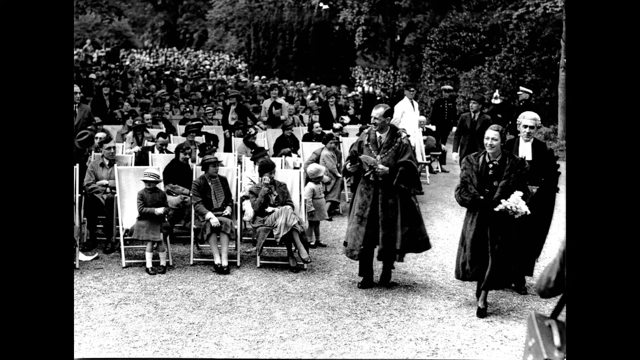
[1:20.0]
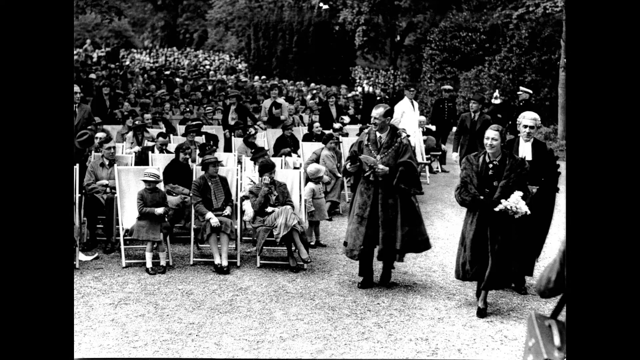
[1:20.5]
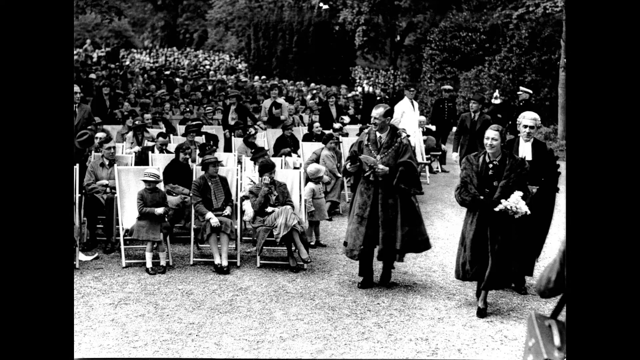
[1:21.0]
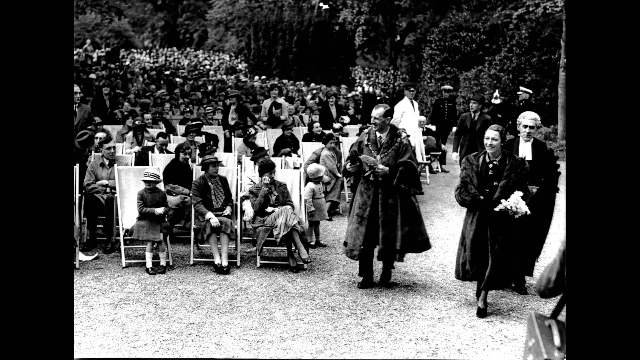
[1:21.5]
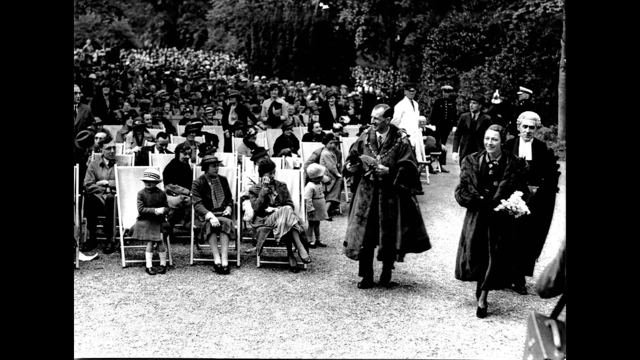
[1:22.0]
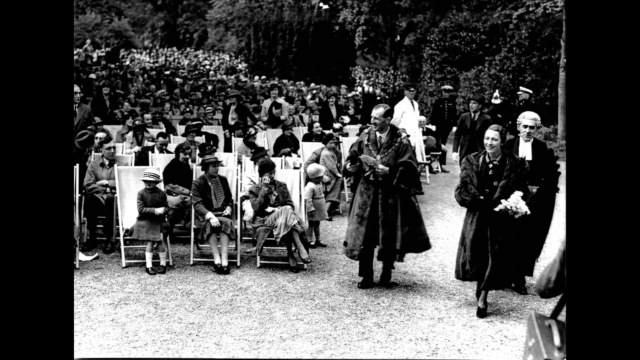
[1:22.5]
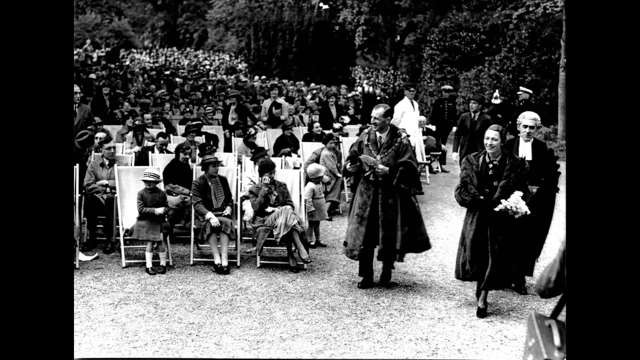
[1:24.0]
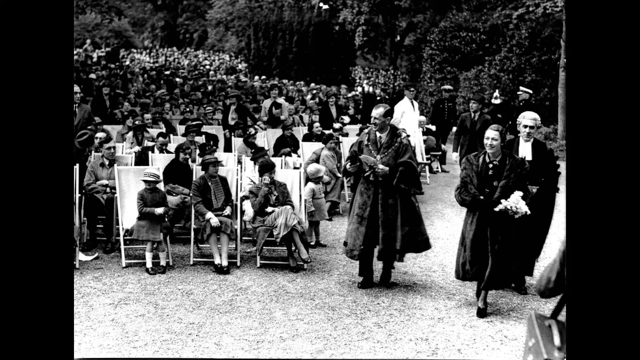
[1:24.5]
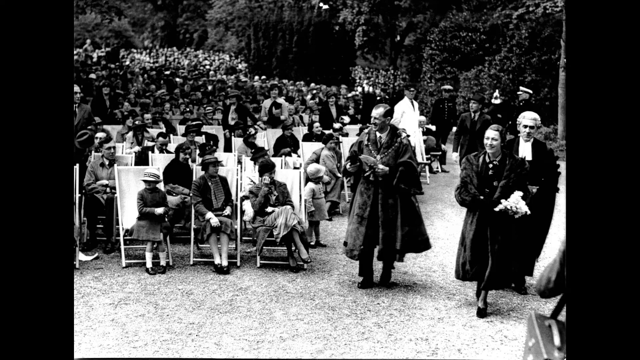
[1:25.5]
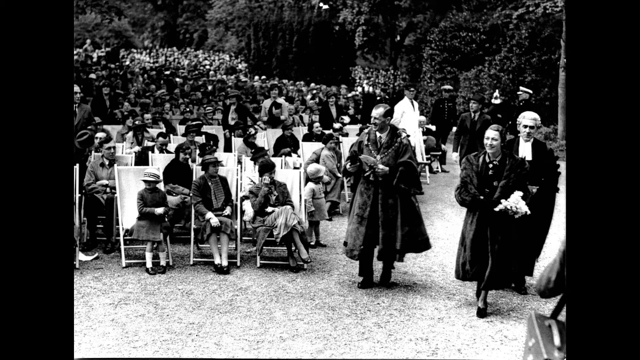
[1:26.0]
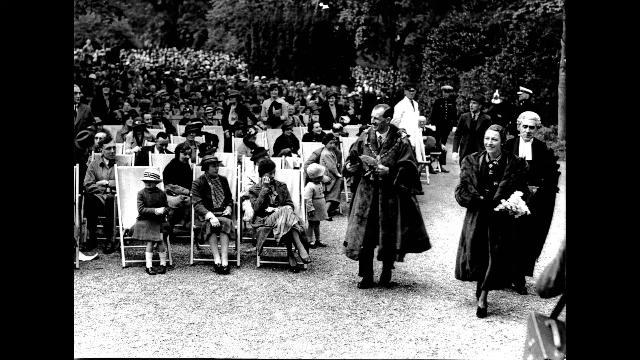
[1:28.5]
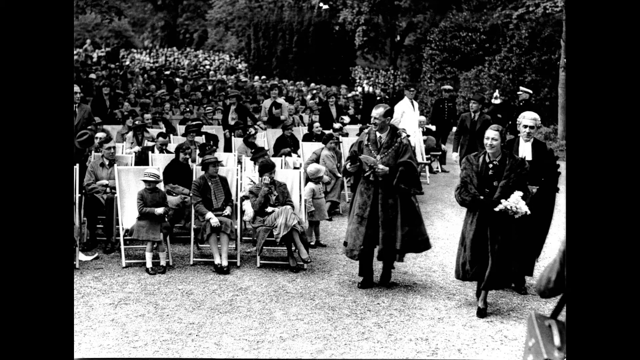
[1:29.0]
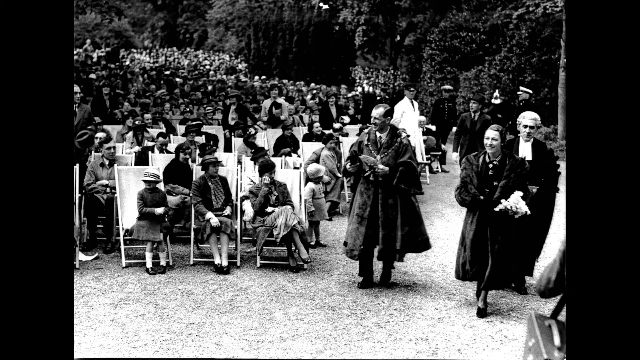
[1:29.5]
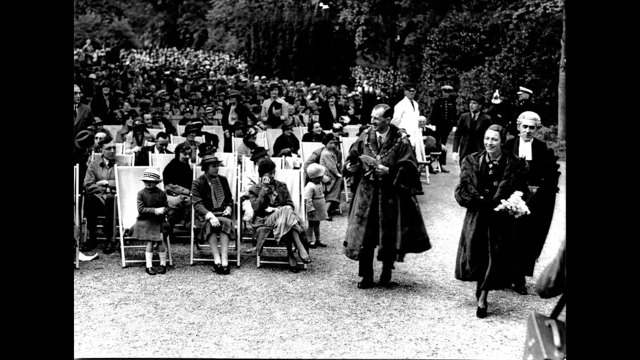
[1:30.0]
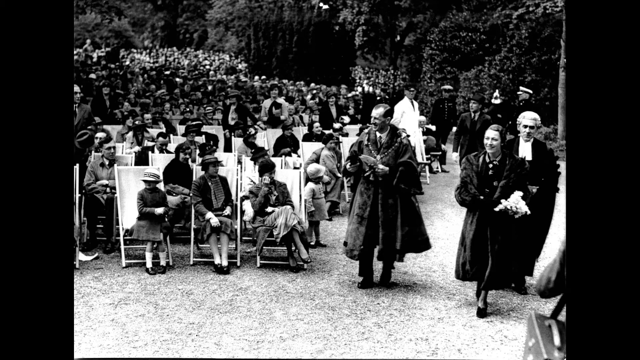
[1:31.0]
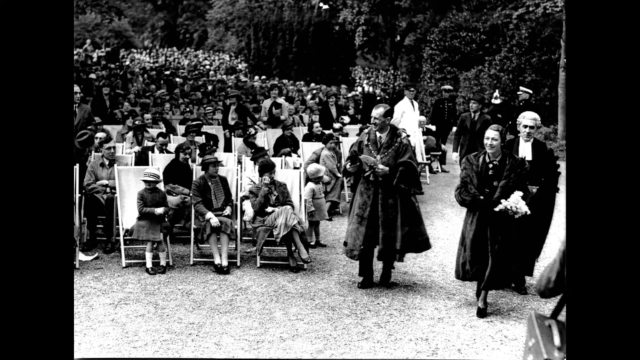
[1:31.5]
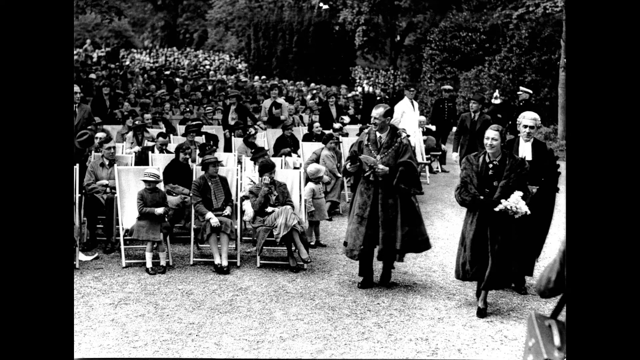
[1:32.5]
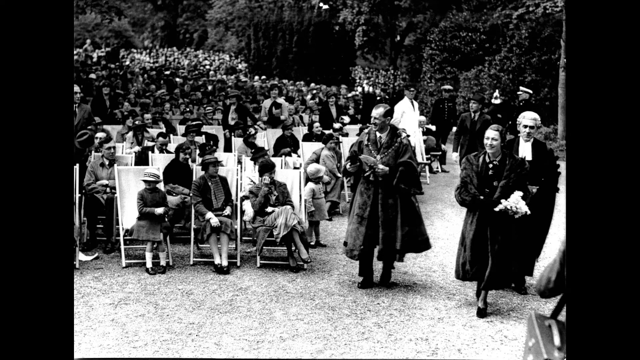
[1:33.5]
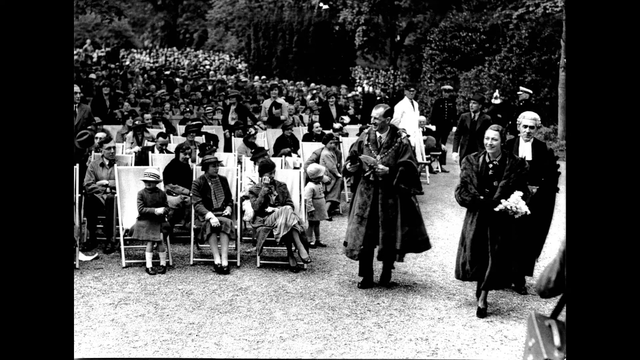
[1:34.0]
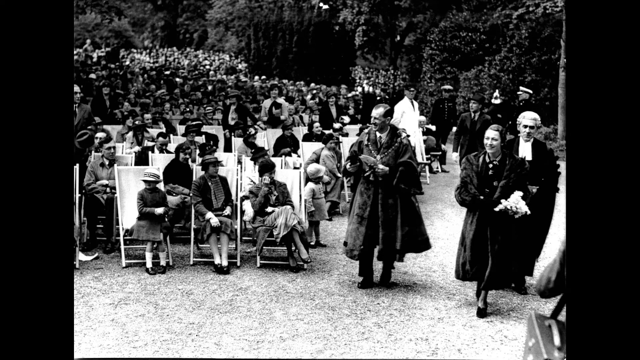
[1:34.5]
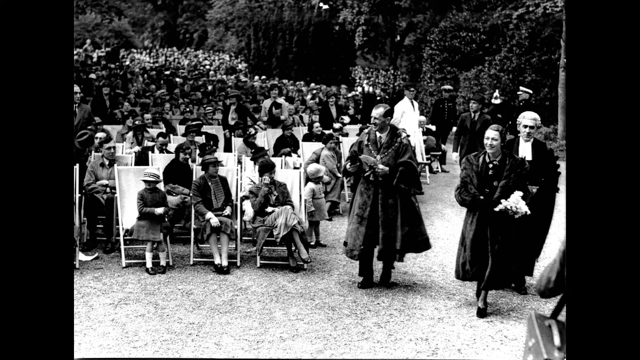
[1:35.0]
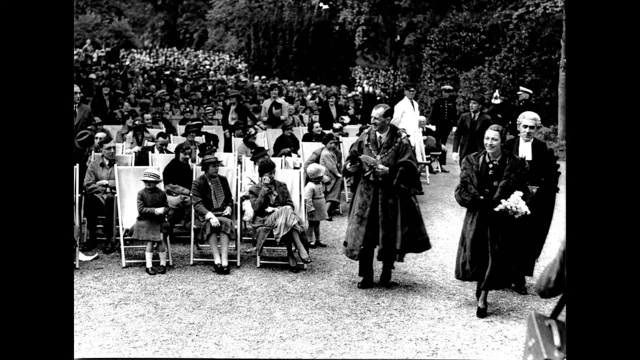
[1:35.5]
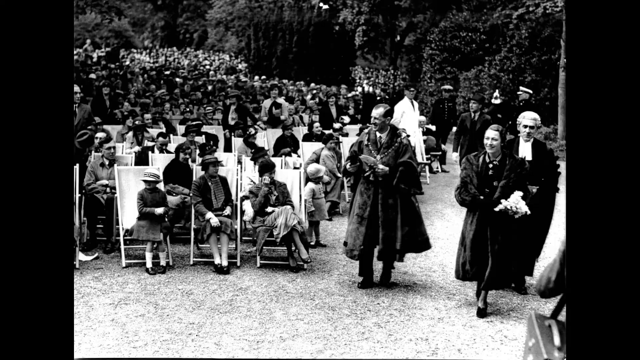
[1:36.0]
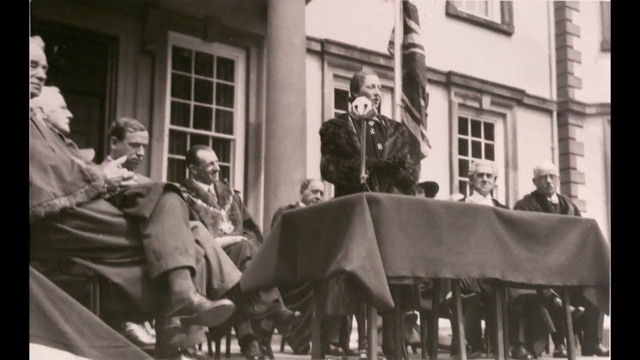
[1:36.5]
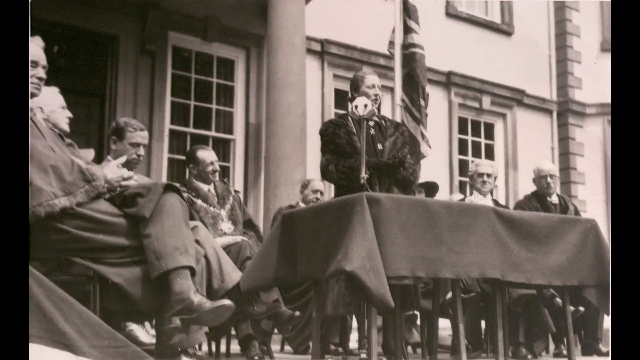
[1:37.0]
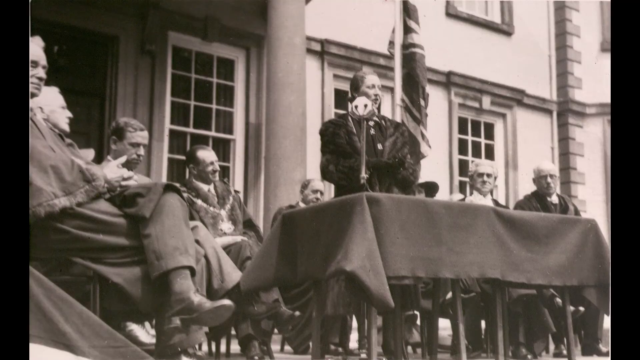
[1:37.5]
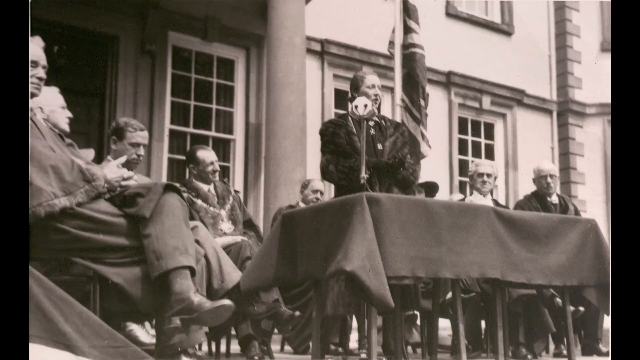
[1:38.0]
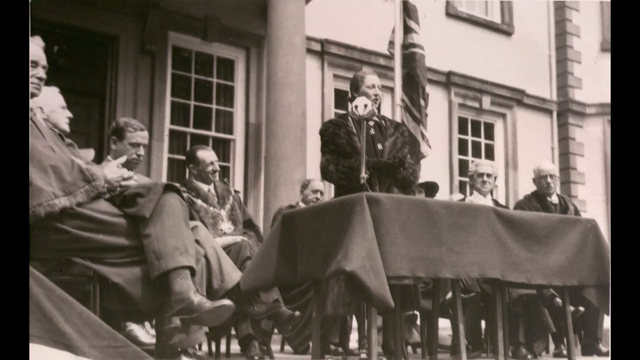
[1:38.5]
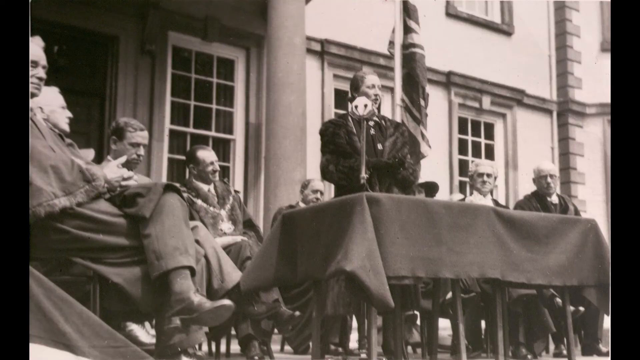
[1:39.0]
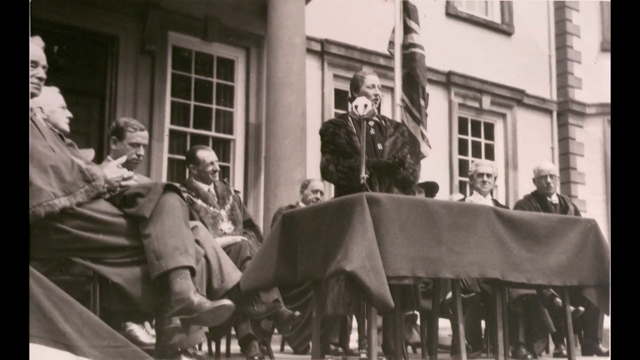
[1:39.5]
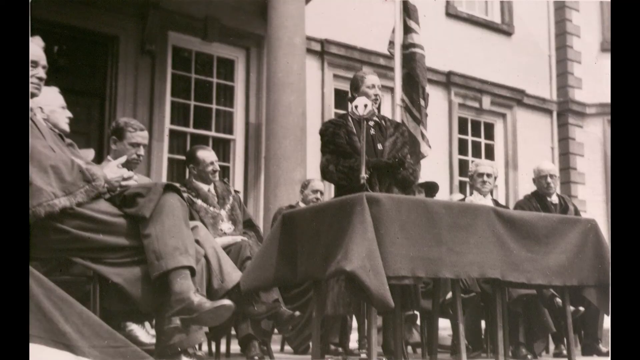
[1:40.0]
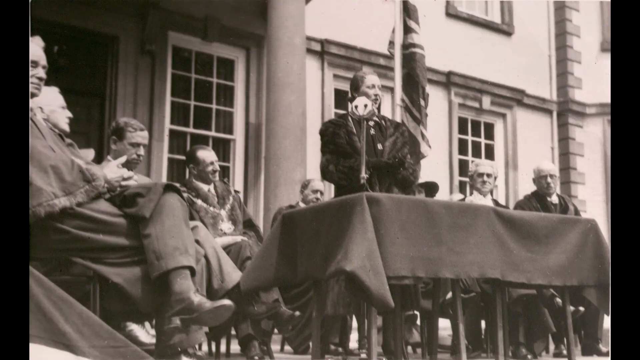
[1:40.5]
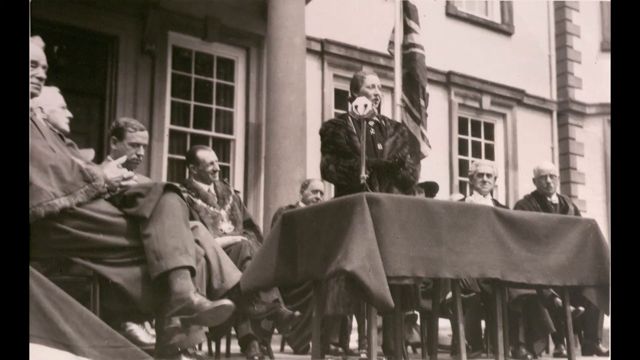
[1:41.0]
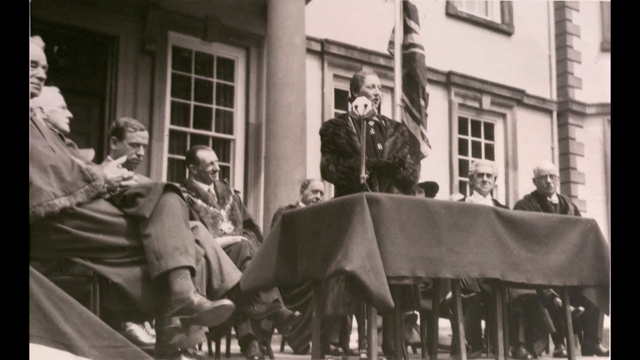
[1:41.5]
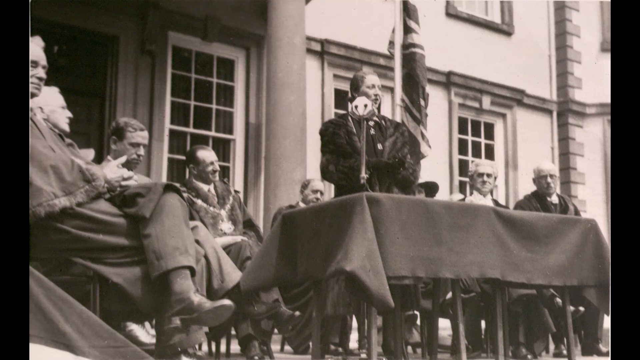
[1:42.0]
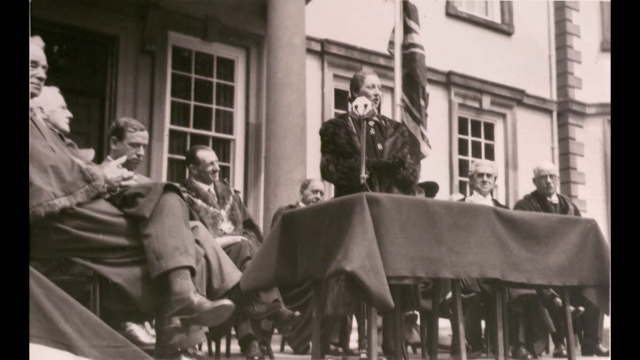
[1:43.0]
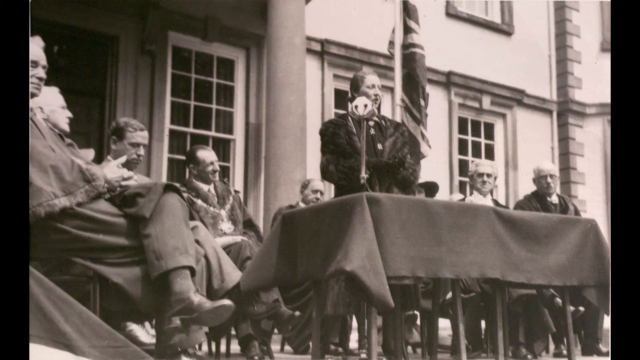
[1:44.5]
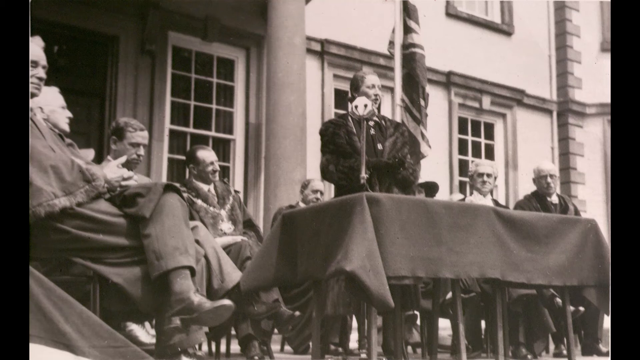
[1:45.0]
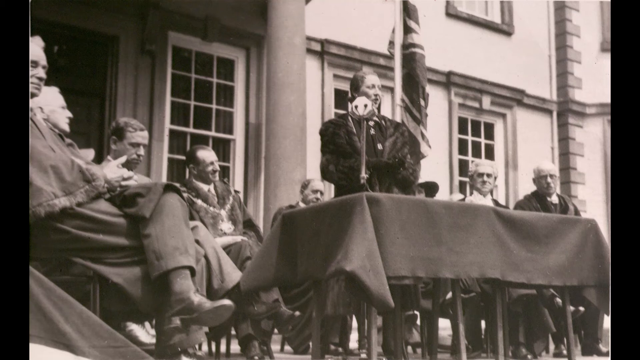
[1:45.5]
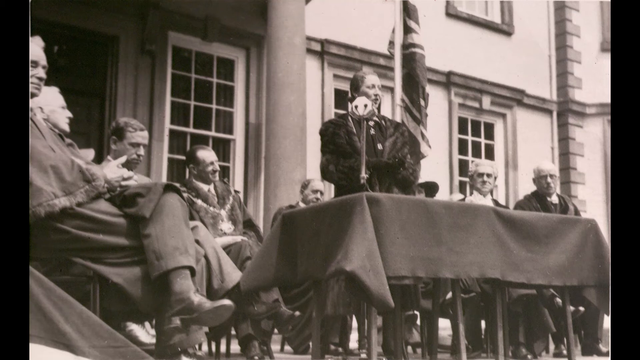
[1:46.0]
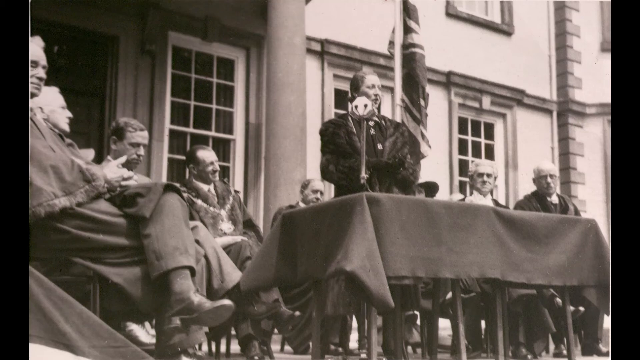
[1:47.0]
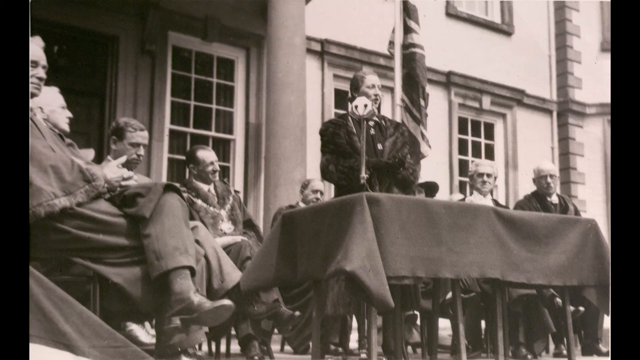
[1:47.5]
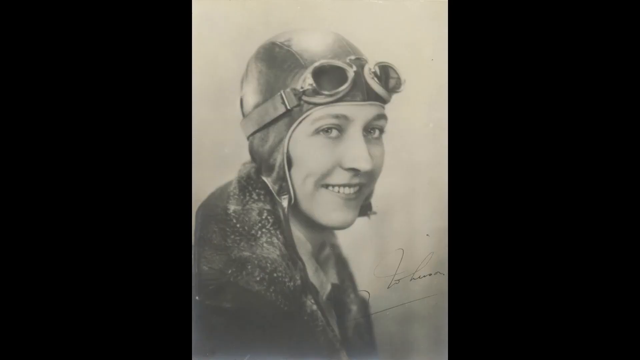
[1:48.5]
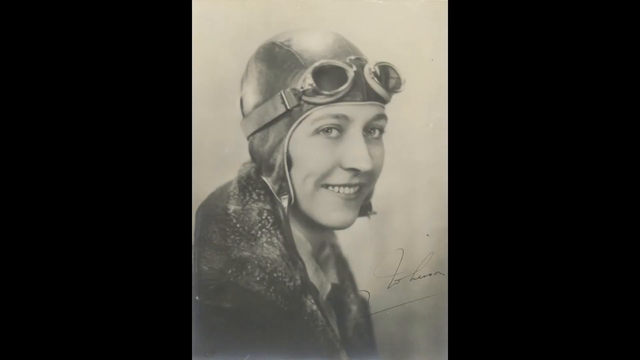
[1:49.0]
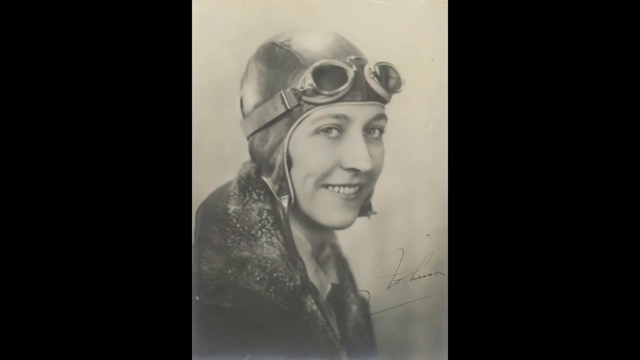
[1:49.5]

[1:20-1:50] The standing or walking group is watched by a large crowd that includes a few kids. One dressed-up girl in the front row is barely sitting because the chair is a little too large for her; she wears a long black jacket, ankle-length socks and black shoes. Nearby is probably her mother, wearing a very similar long black outfit but no socks. Beside her, another woman has her legs crossed and wears a lighter-colored skirt. To the right of her, another little girl stands in a whiter dress and a white hat. More people in mostly black outfits are in the back. A woman stands with a microphone beside her mouth, on her left from the viewer's perspective. Behind and around her are eight people, seven men and one woman. The woman standing up seems to be giving a speech; she is the woman who wore the long black fur coat in the previous picture.